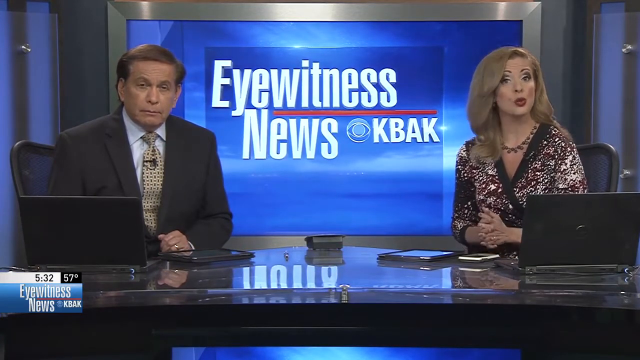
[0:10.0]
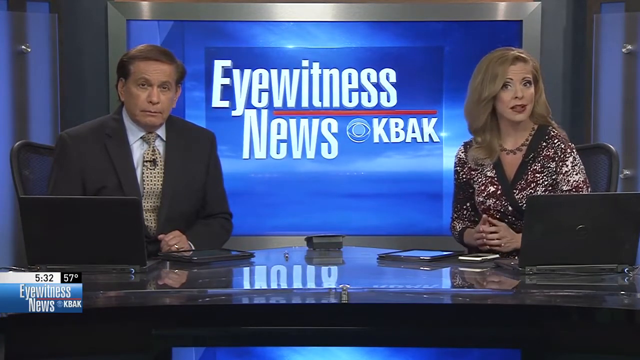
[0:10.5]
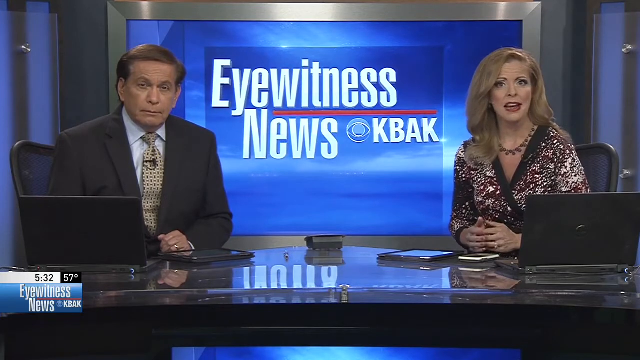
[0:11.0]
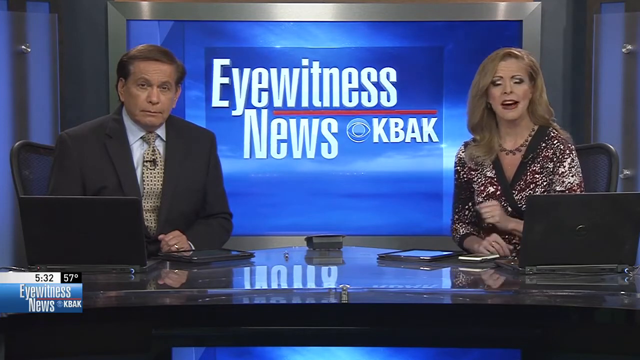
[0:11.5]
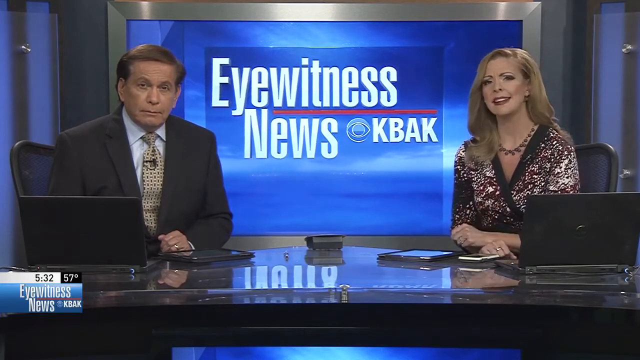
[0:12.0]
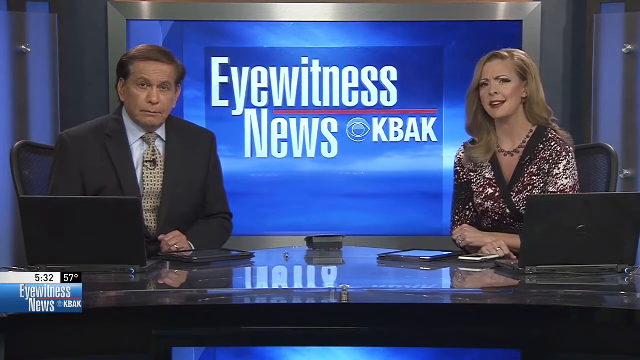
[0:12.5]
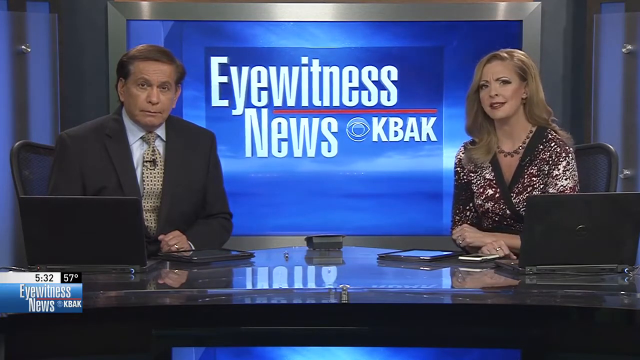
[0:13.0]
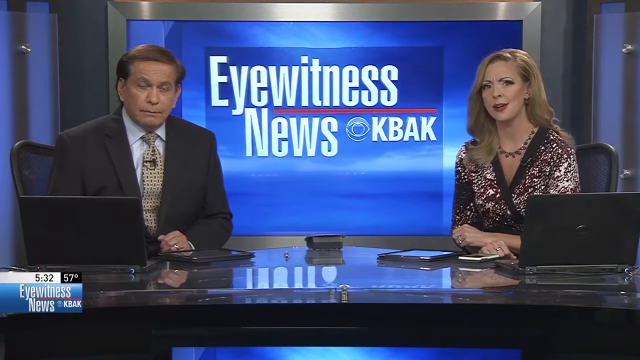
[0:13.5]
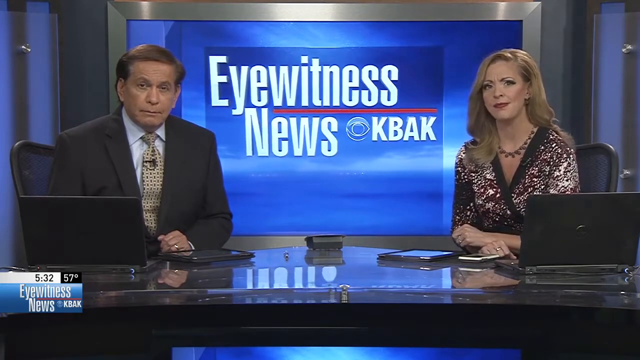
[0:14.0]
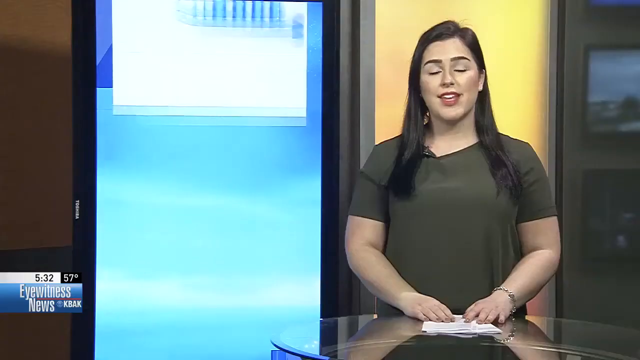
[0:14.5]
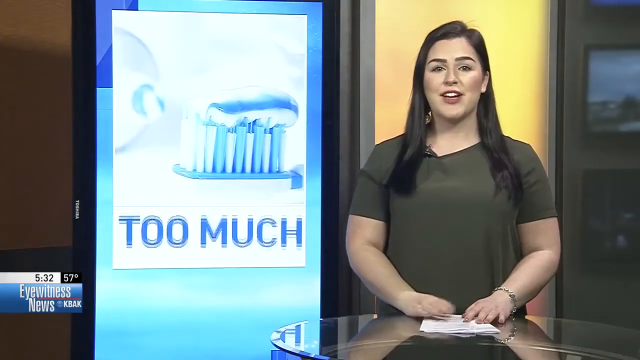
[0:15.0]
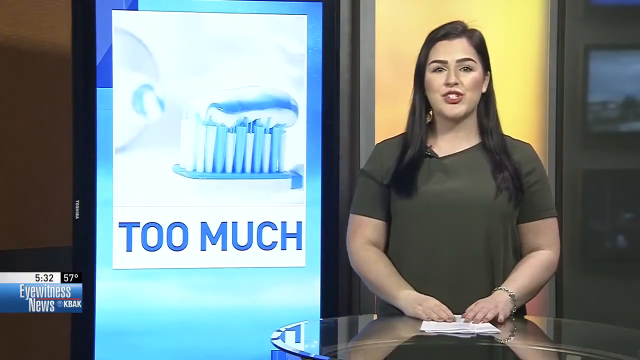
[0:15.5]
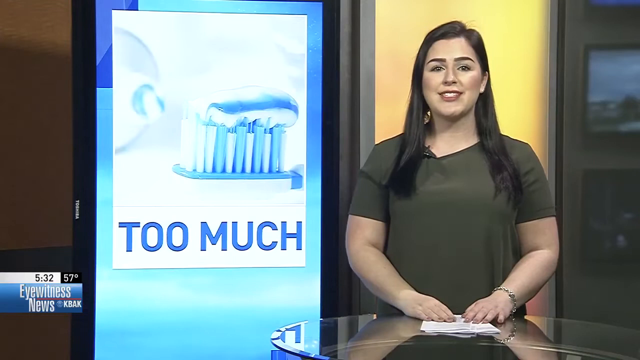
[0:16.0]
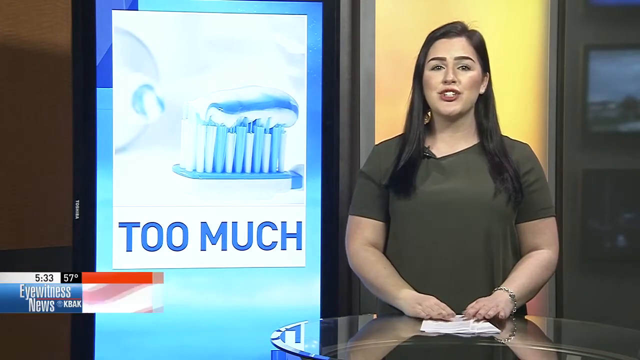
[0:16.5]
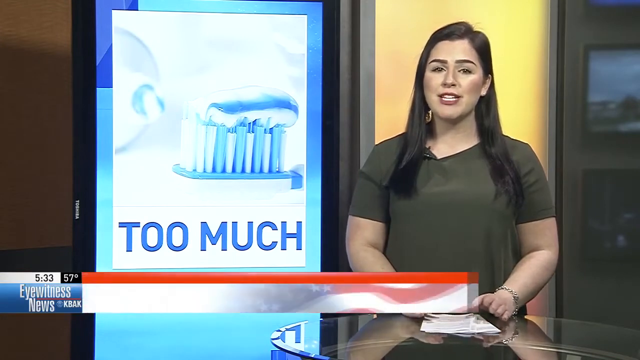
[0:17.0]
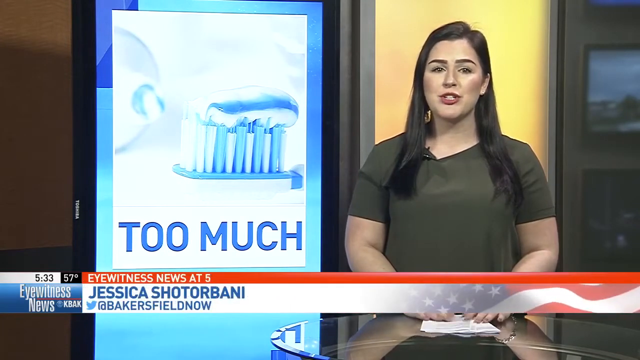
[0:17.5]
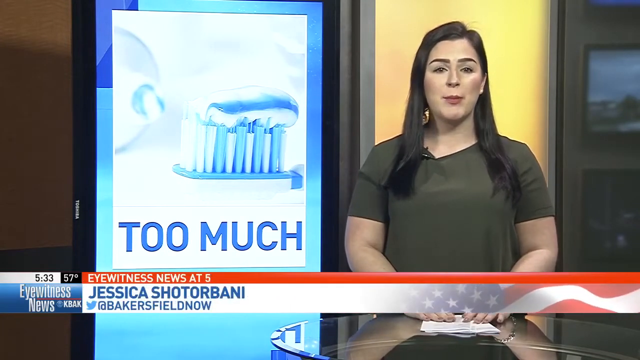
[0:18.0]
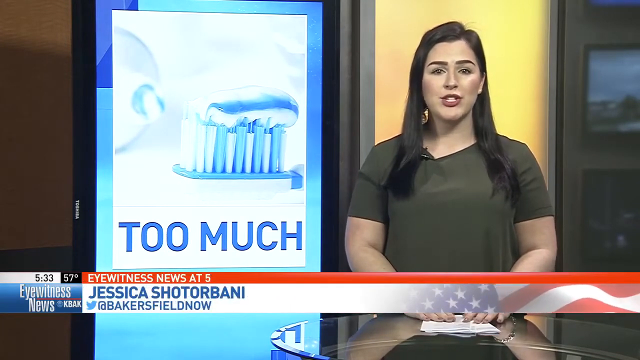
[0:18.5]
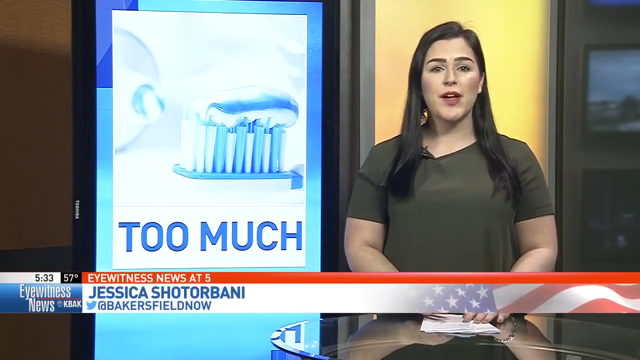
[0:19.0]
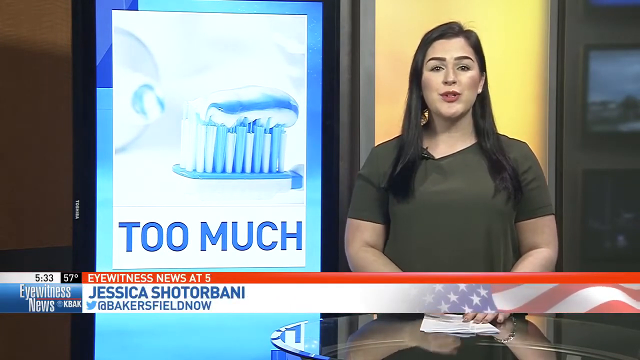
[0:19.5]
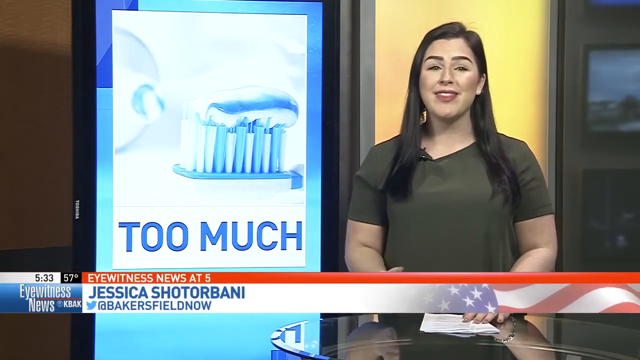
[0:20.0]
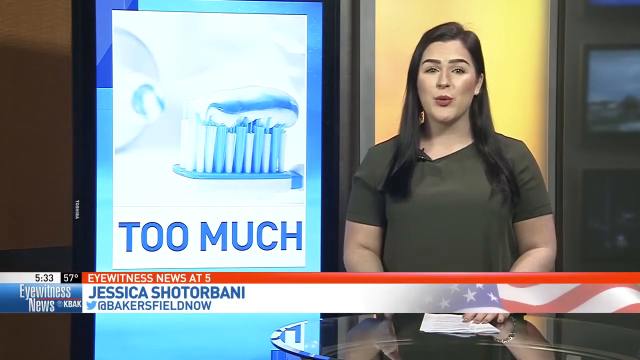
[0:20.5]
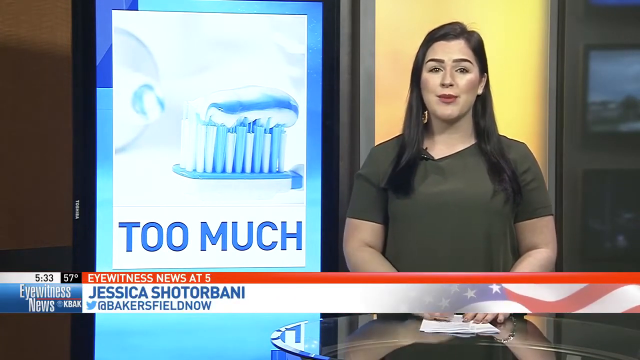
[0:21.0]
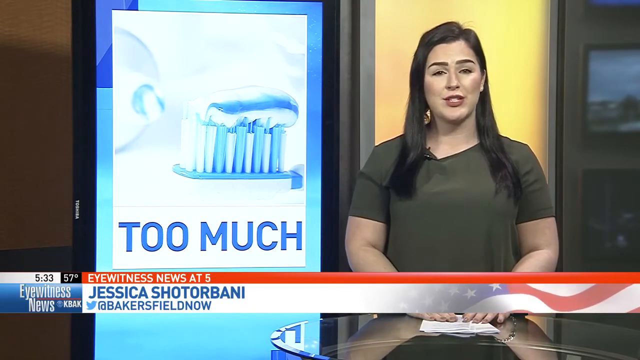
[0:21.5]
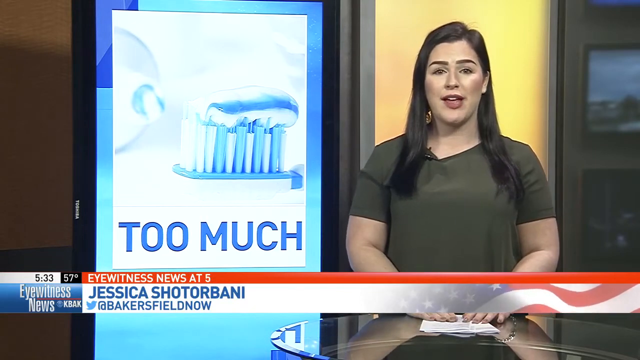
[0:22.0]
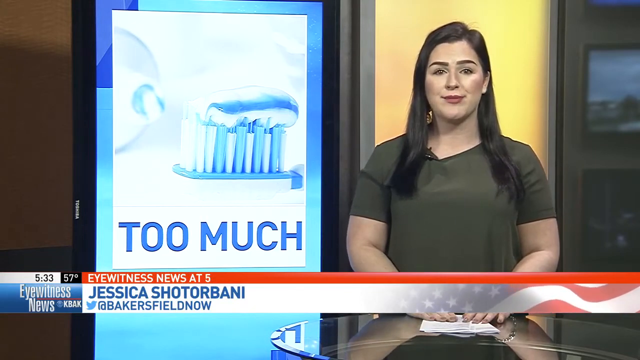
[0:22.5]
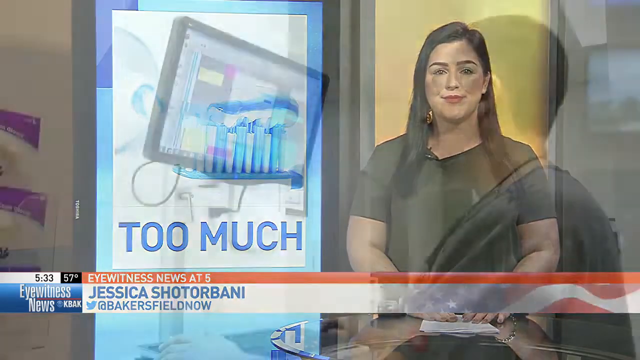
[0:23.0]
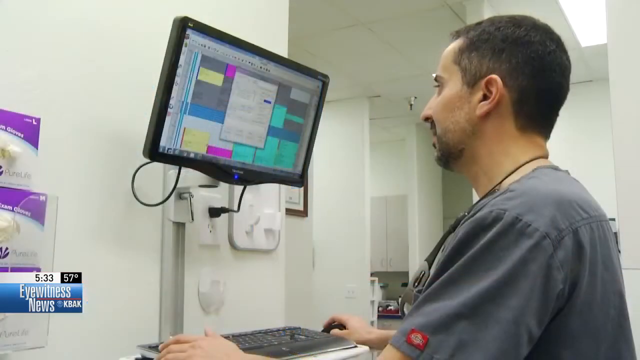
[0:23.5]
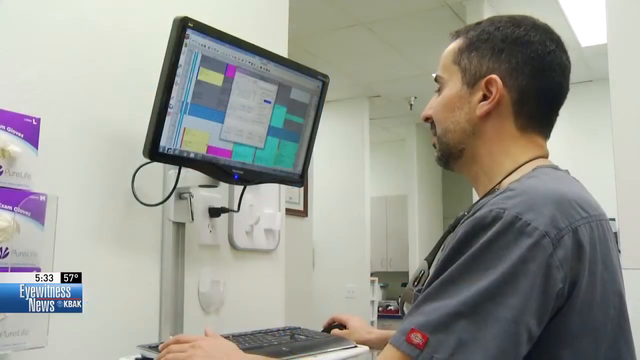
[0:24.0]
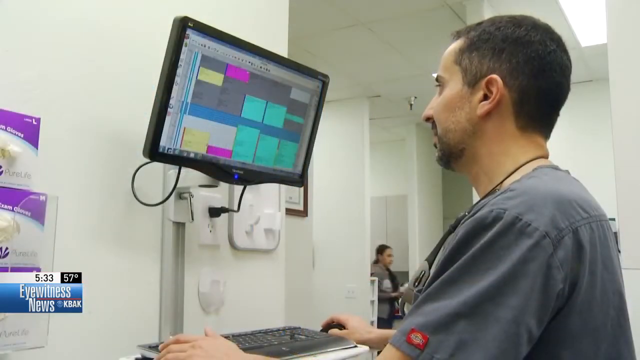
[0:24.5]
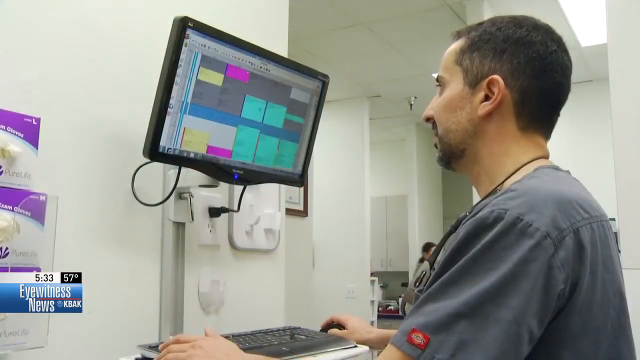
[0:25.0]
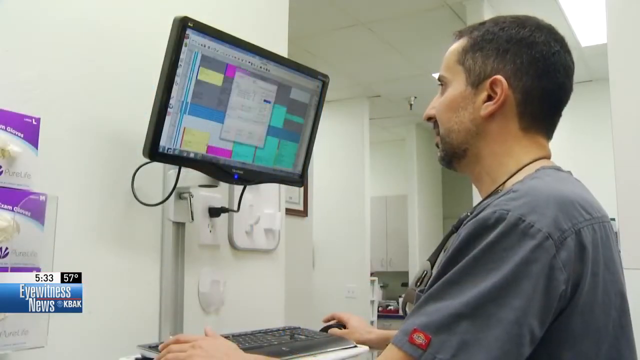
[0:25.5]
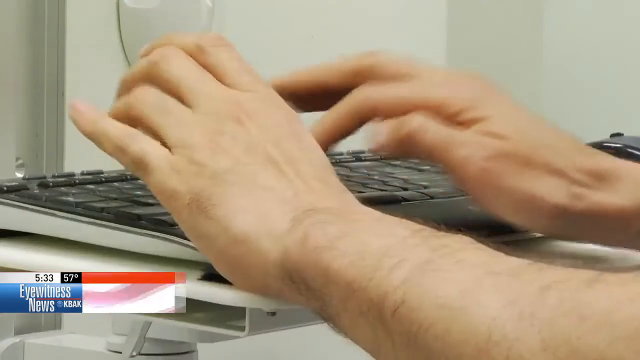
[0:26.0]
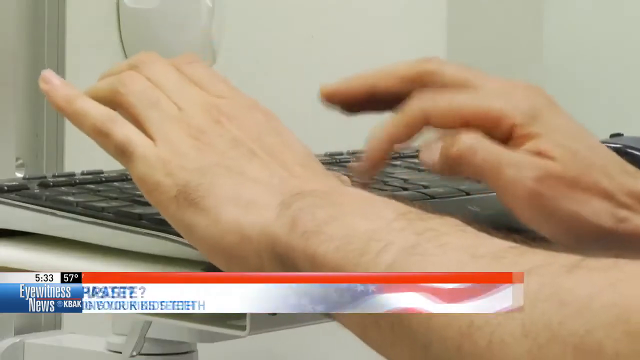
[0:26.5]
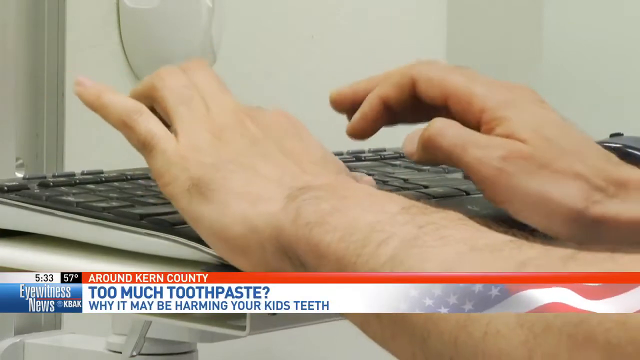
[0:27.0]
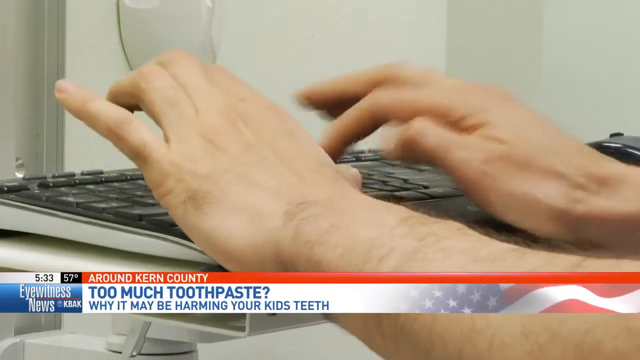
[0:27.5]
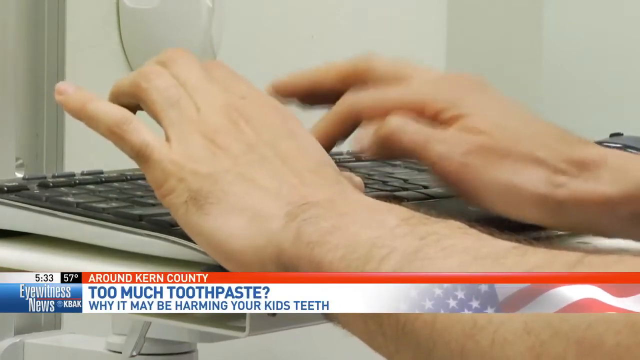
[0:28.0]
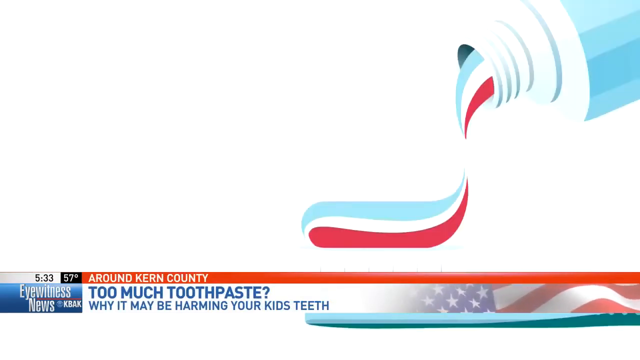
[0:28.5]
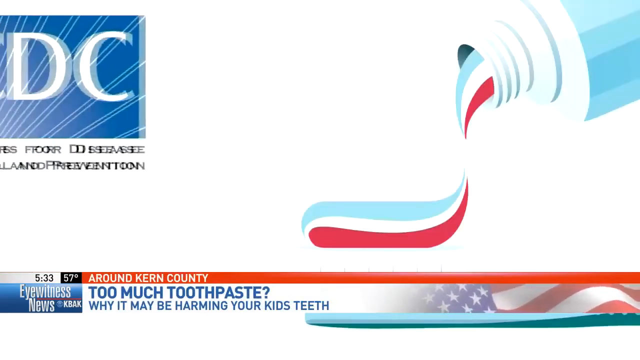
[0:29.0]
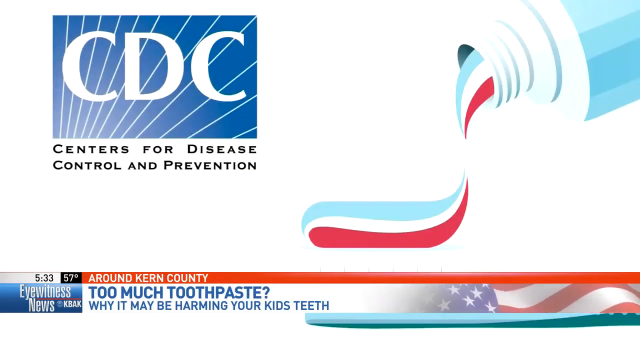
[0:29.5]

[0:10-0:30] Two people sit behind a news desk and remain seated. The woman on the right speaks while facing the camera directly, gesturing a little with her hands: she moves them from an interlocked-finger position to both hands parallel with fingers straight out, then, as she continues talking, places them on the table in front of her with closed fists, one arm on top of the other, crossed at the wrists. In a new view, a woman wearing green stands on the right side of the frame, gesturing a little with her hands, next to a screen showing toothpaste on a toothbrush and the words "too much". Next, a man stands at a computer, turned in profile at an angle, looking at a monitor on the wall. Then a hand types on a keyboard: the right hand hits keys with the pointer finger while the left pinky is raised in the air.